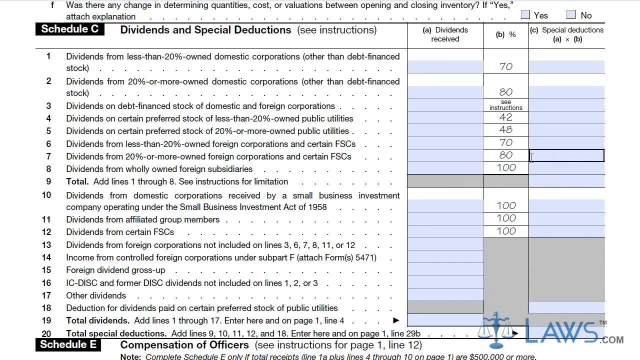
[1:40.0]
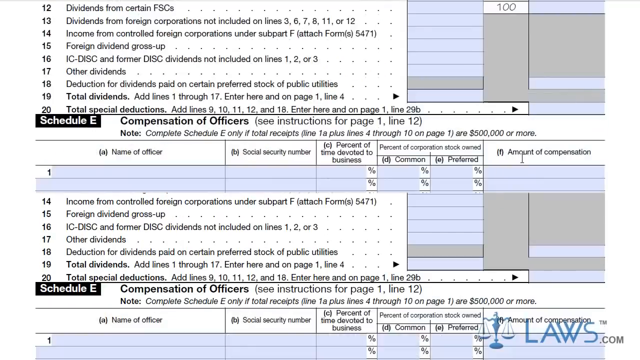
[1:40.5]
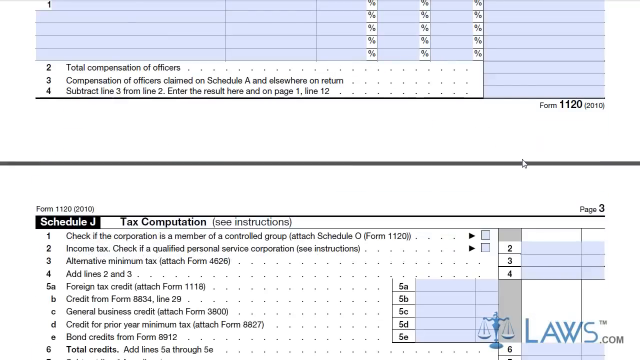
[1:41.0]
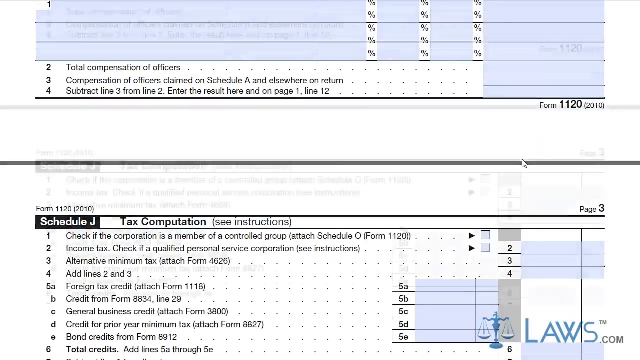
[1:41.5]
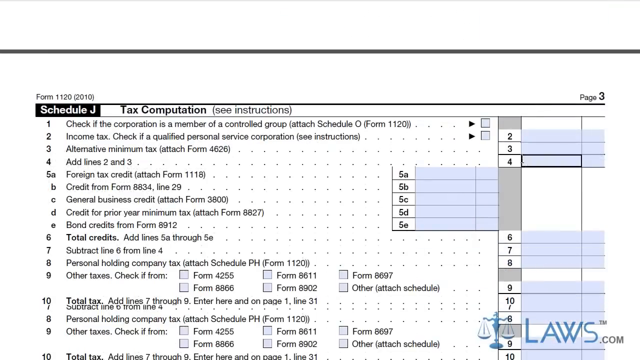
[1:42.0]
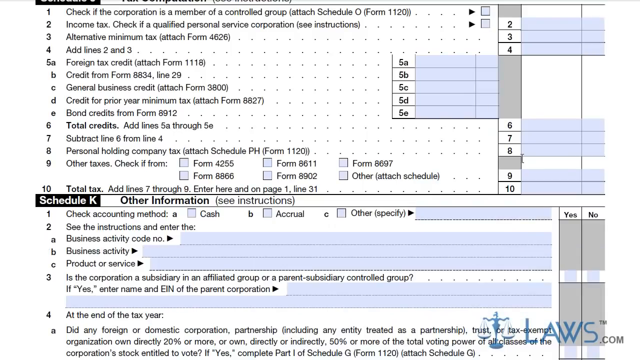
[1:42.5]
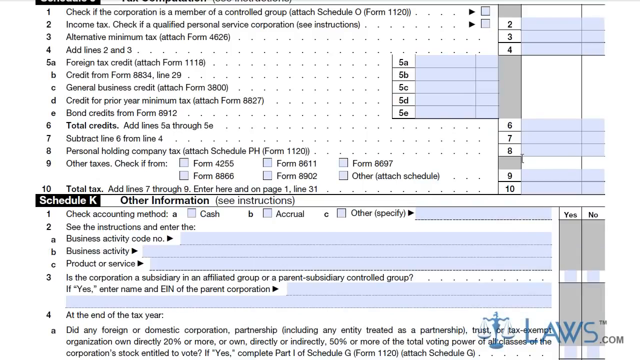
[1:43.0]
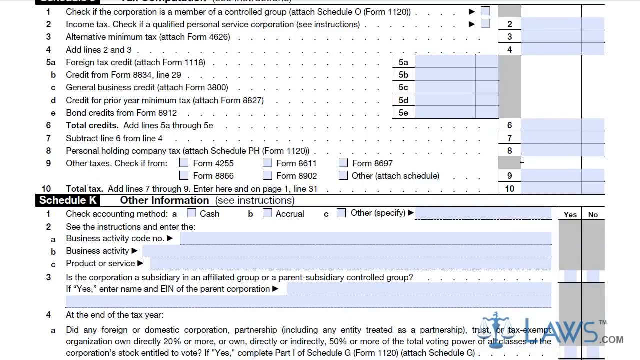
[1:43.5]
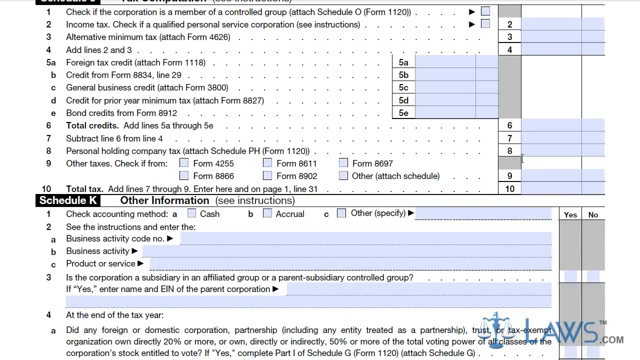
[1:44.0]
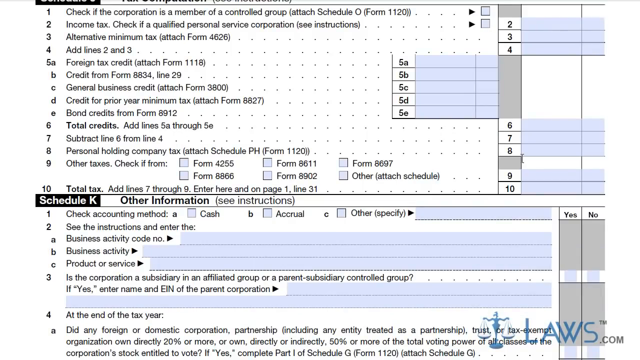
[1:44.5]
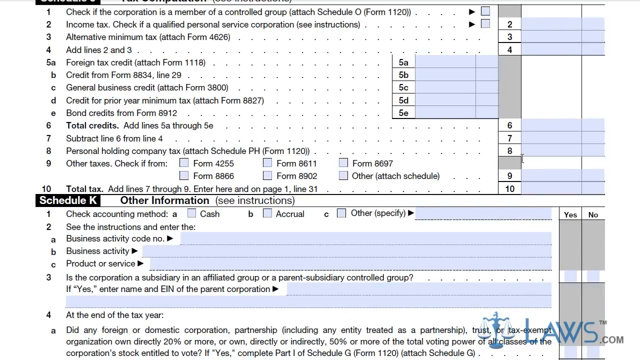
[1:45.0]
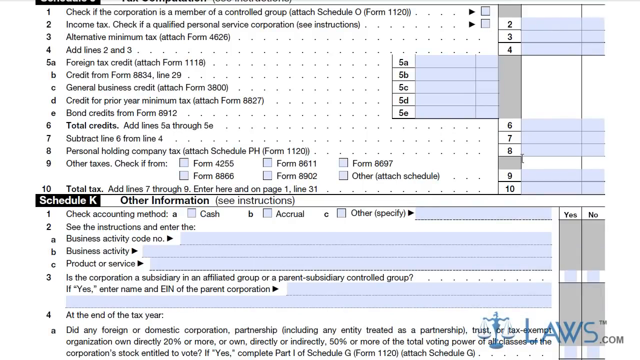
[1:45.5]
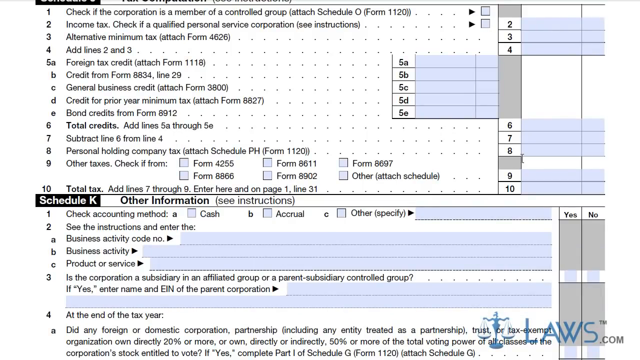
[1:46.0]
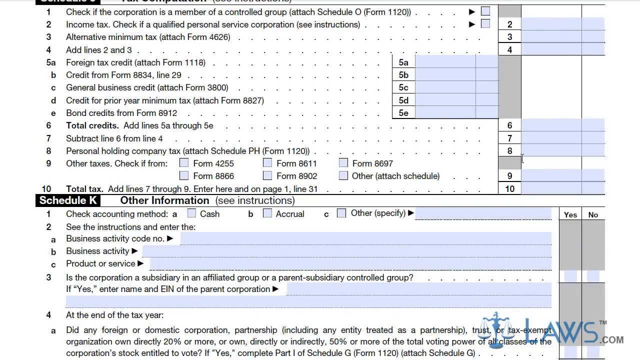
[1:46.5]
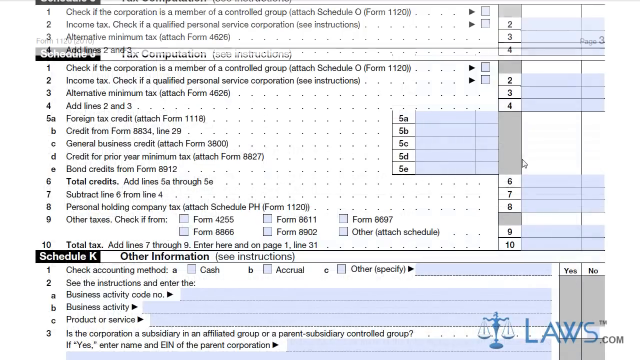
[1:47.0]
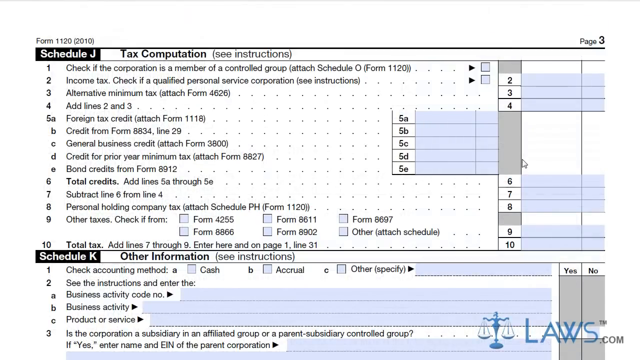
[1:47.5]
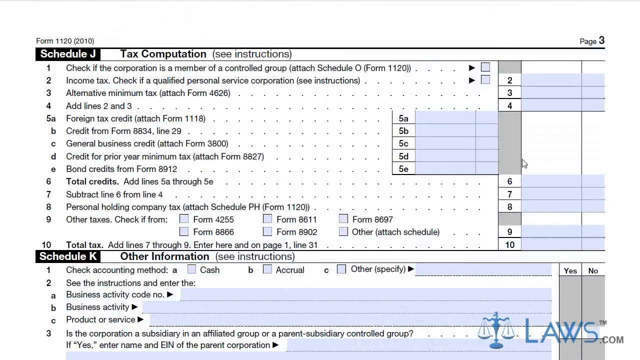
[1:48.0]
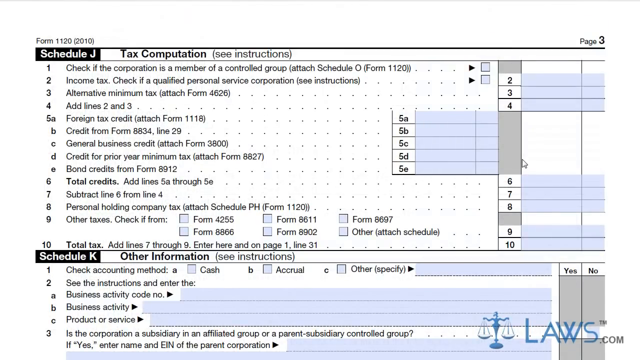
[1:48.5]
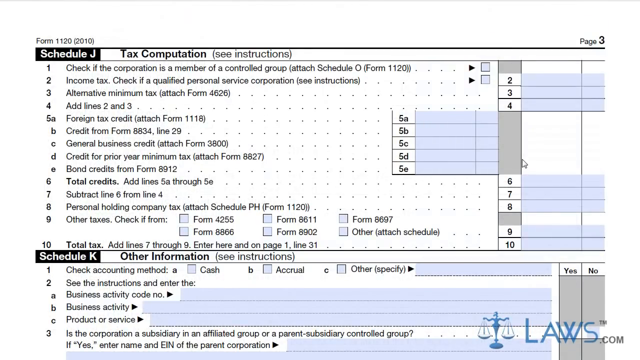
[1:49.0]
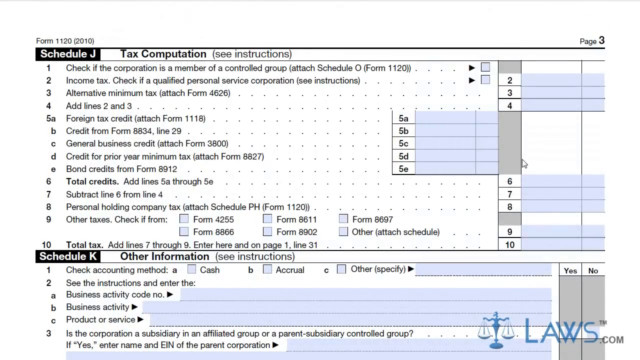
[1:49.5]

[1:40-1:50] The view scrolls to Schedule J, Tax Computation. Its lines include: check if the corporation is a member of a controlled group, income tax, alternative minimum tax, add lines two and three, 5A foreign tax credit, 5B credit from form 8834, 5C general business credit, 5D credit for prior year minimum tax, 5E bond credits, 6 total credits, 7 subtract line six from line four, 8 personal holding company tax, 9 other taxes, and 10 total tax. The next section is Schedule K, Other Information.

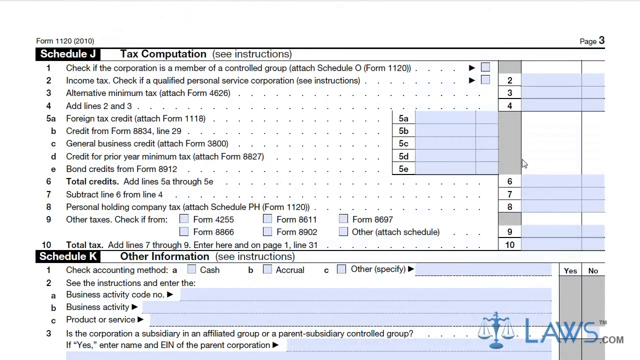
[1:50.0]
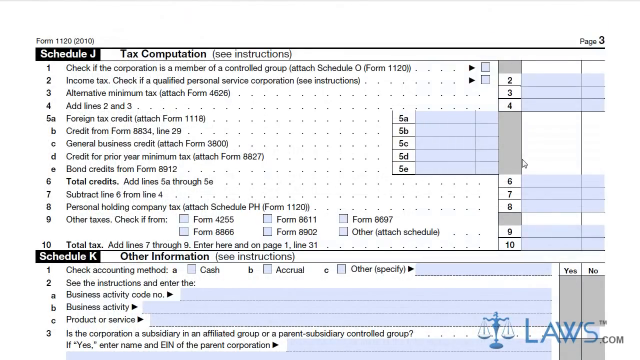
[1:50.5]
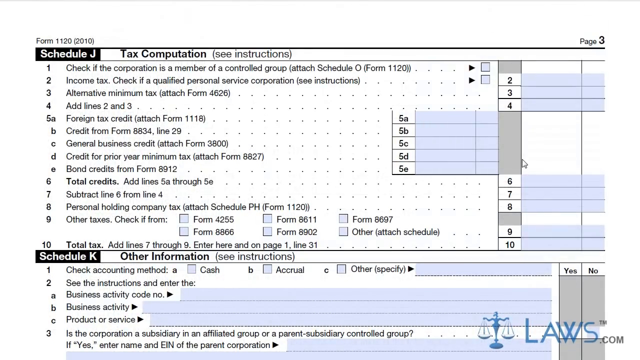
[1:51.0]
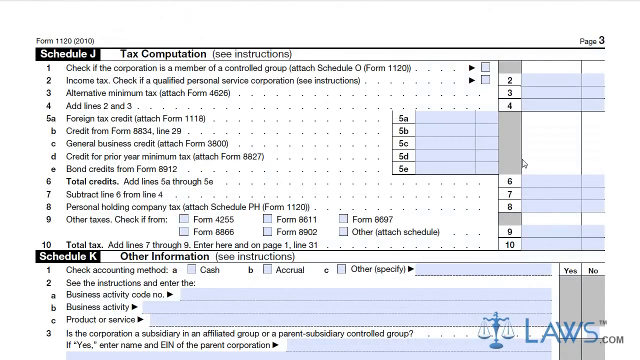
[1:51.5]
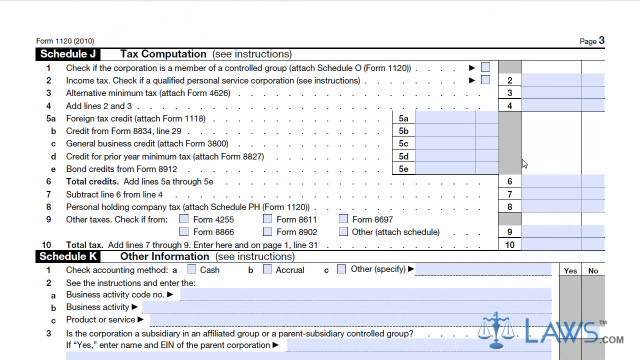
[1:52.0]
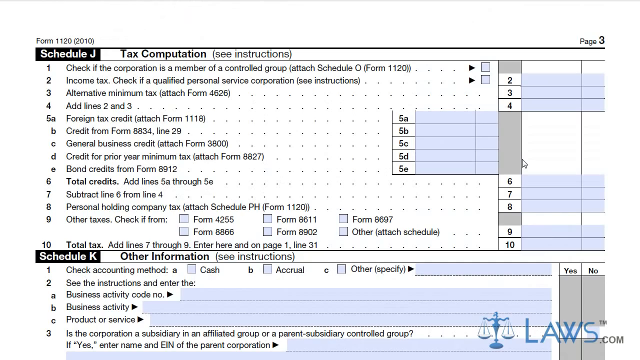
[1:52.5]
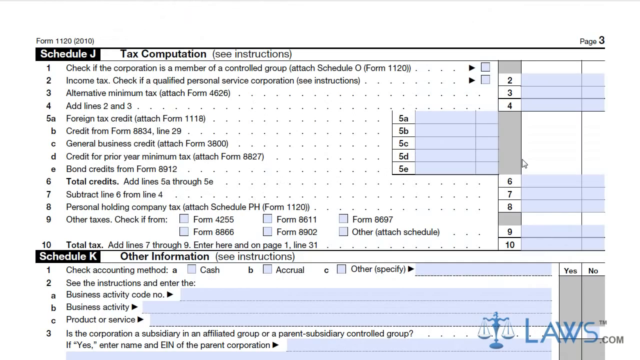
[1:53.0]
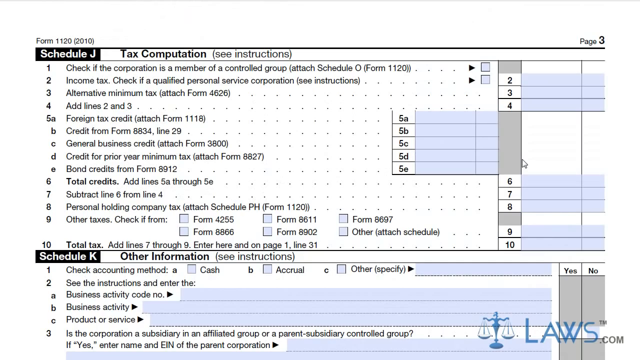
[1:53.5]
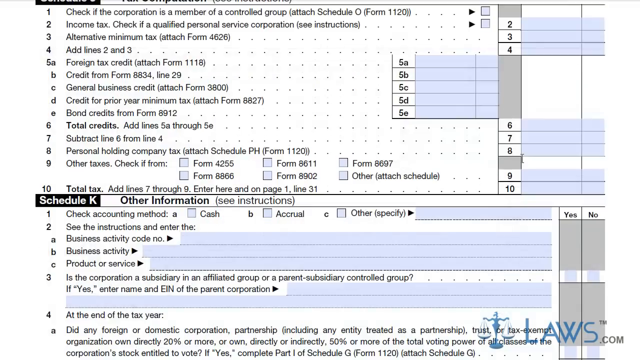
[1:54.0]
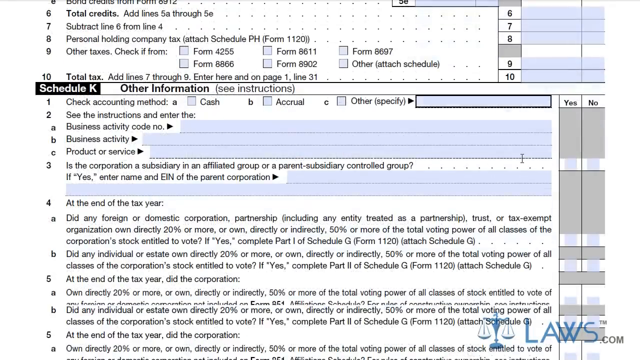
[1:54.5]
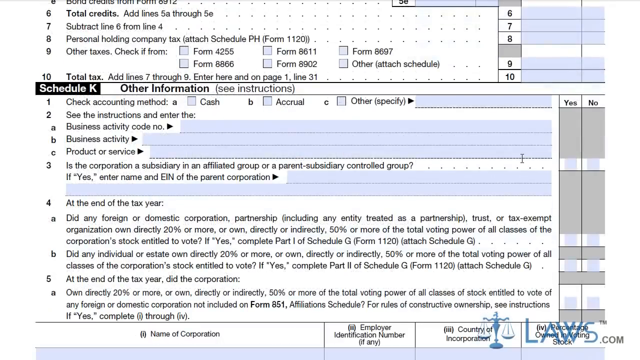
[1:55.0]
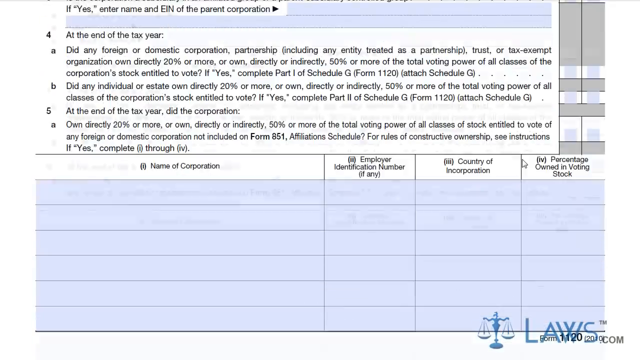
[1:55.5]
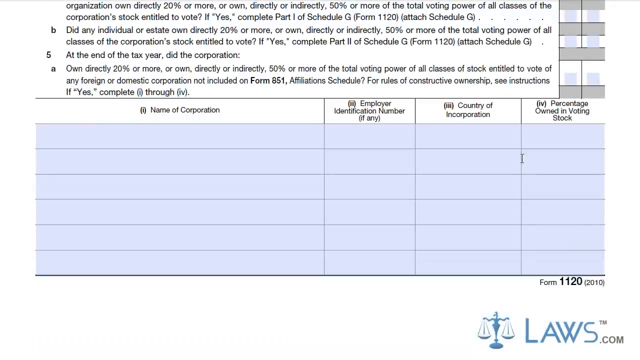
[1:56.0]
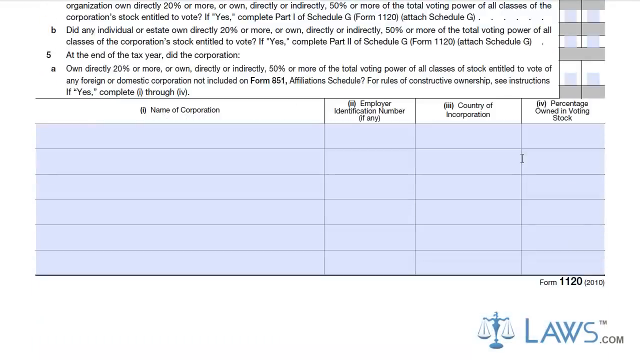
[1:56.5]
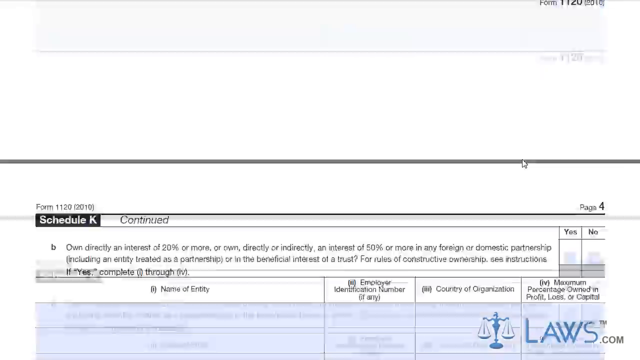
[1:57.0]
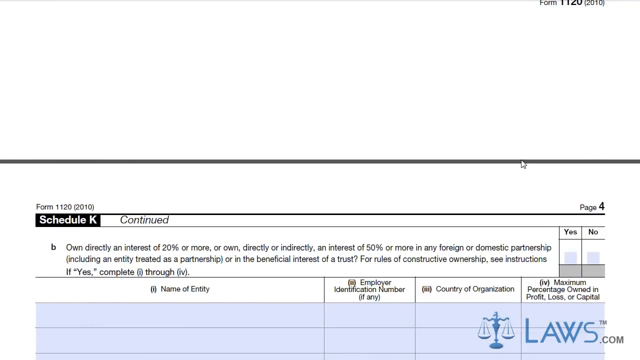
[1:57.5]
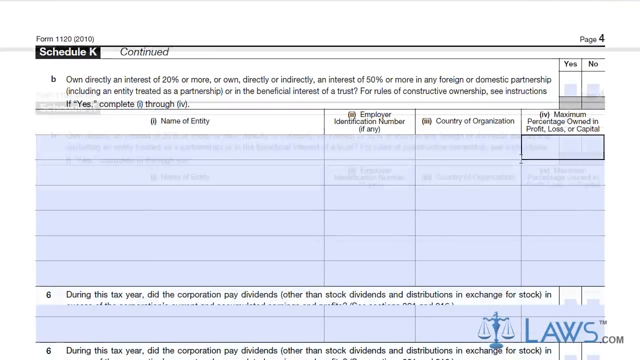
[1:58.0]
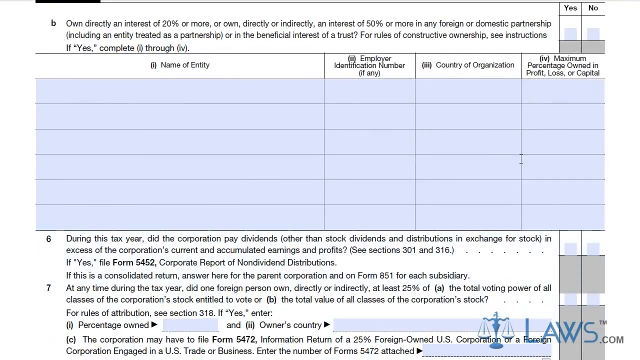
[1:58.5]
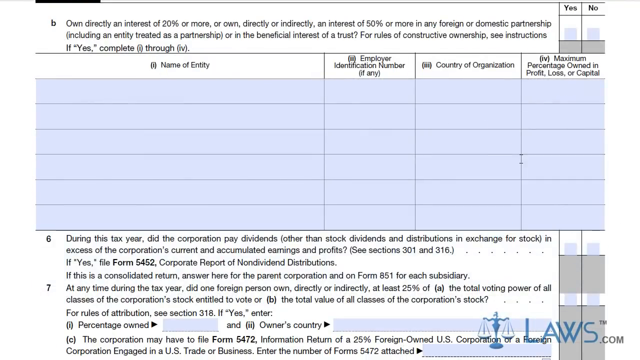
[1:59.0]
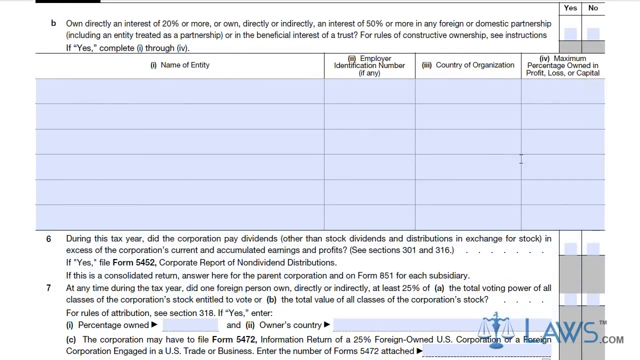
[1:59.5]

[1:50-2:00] The view scrolls from Schedule J to Schedule K and through its other information questions. These include check accounting method, with cash, accrual, or other; "see the instructions and enter the business activity code," business activity, and product or service; whether the corporation is a subsidiary of another company; and questions about whether, at the end of the tax year, any foreign or domestic corporation, partnership, trust, or tax-exempt organization, or any individual or estate, owns directly 20% or more or directly or indirectly 50% or more of the total voting power of all classes of the corporation's stock entitled to vote, with instructions to complete part 1 or part 2 of Schedule G (form 1120) if yes. Another question asks whether, at the end of the tax year, the corporation owned directly 20% or more, or directly or indirectly 50% or more, of the total voting power of all classes of stock entitled to vote of any foreign or domestic corporation.